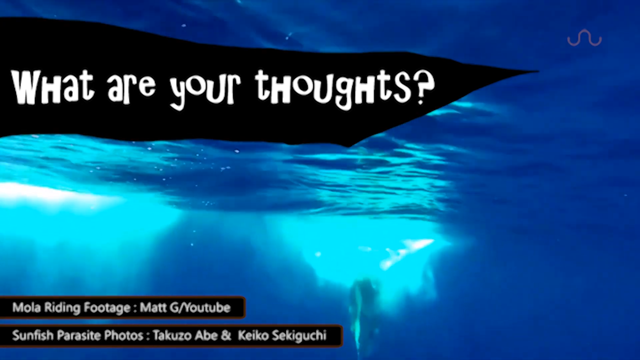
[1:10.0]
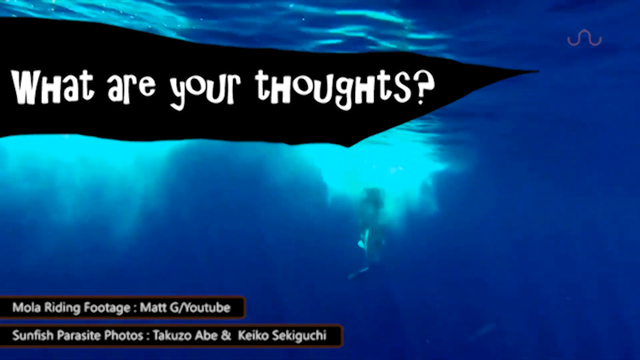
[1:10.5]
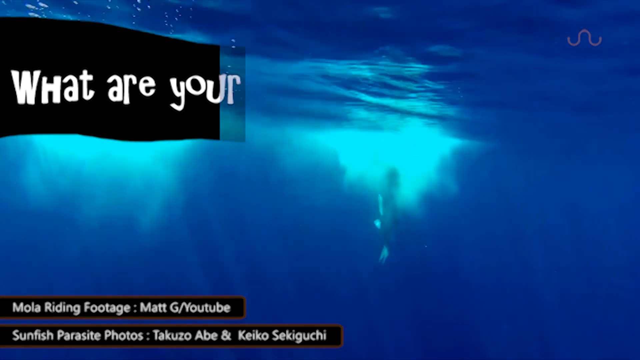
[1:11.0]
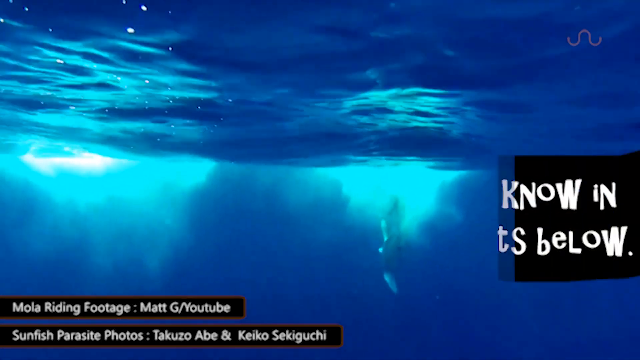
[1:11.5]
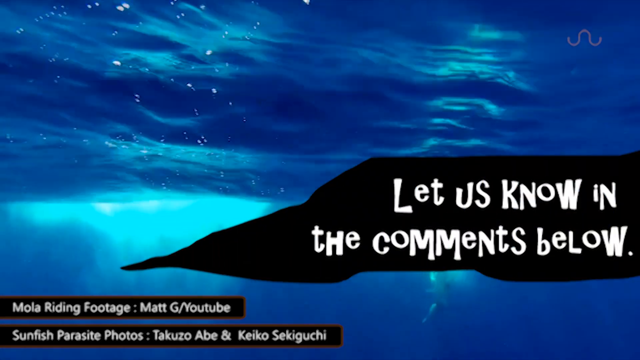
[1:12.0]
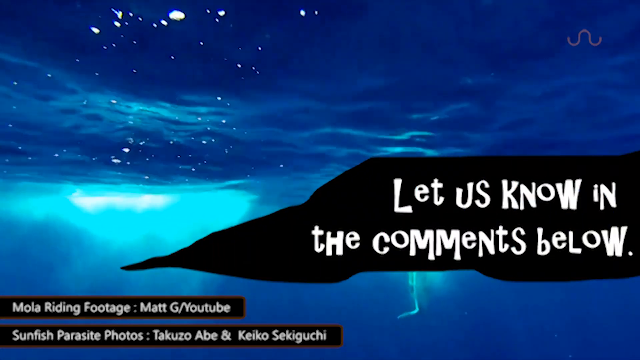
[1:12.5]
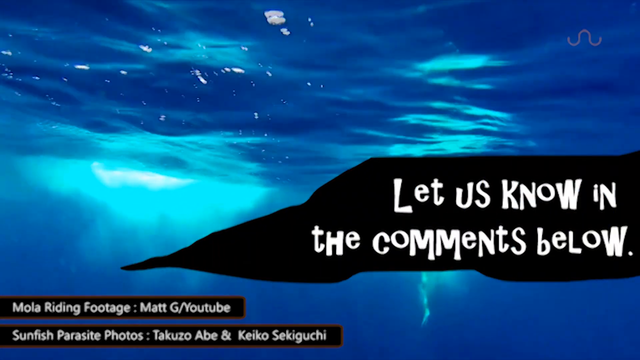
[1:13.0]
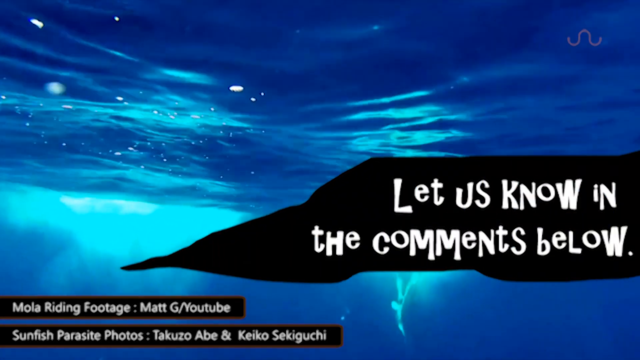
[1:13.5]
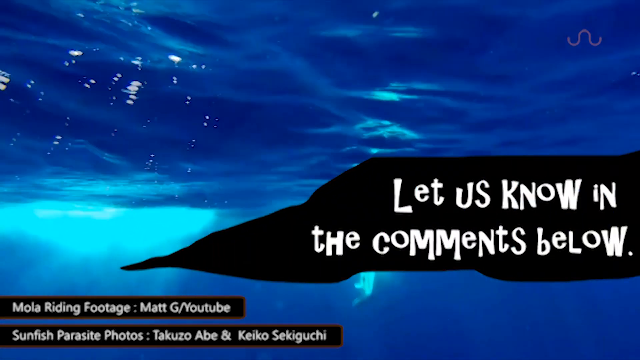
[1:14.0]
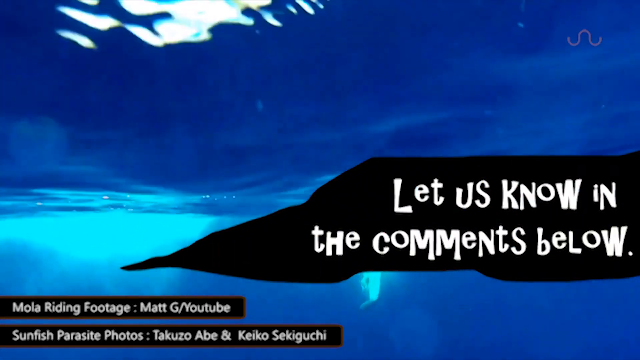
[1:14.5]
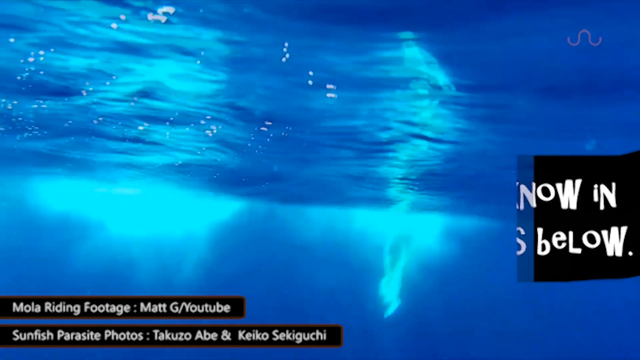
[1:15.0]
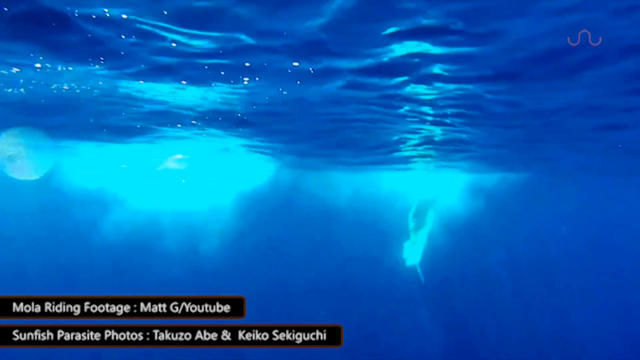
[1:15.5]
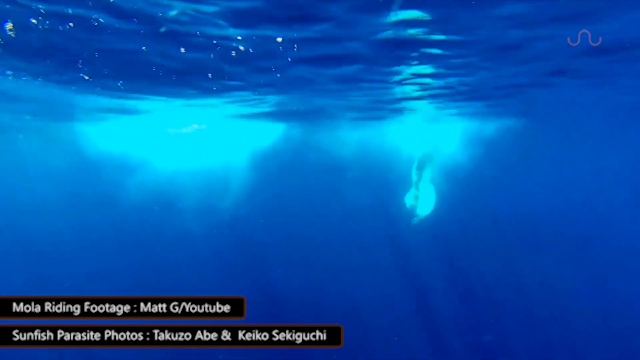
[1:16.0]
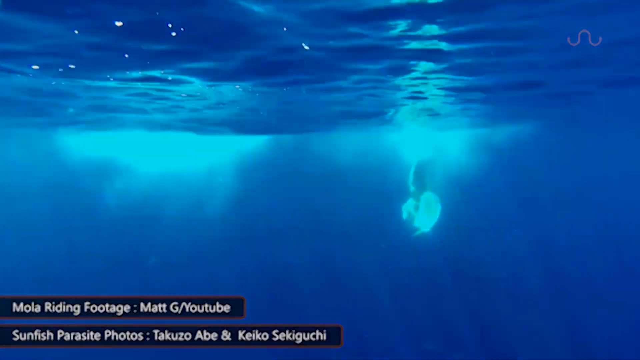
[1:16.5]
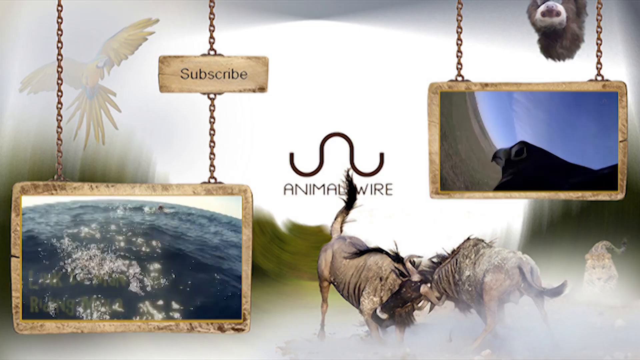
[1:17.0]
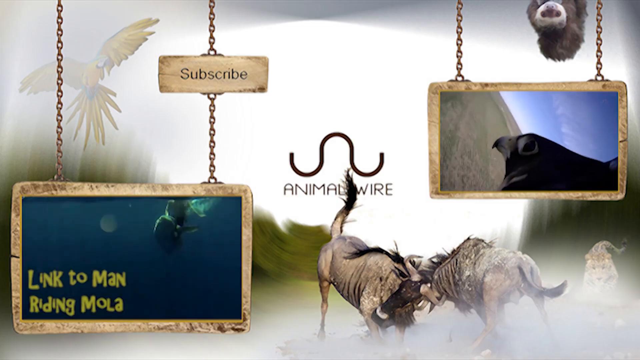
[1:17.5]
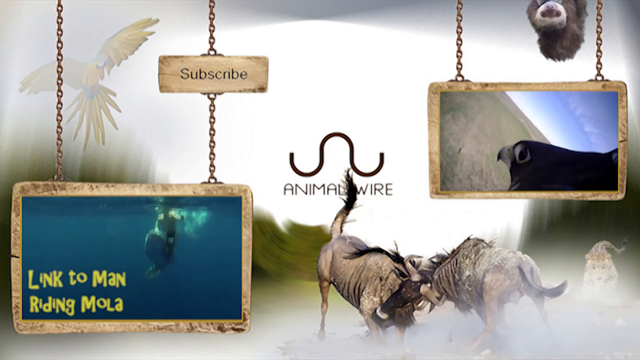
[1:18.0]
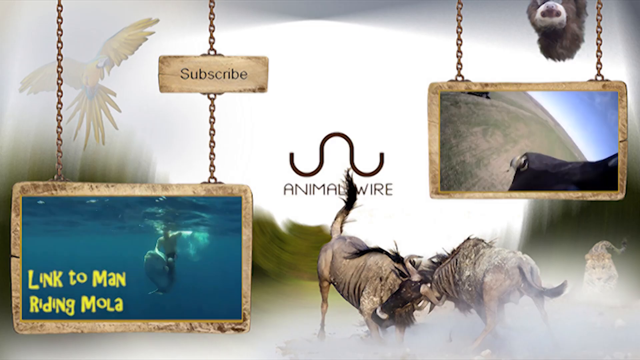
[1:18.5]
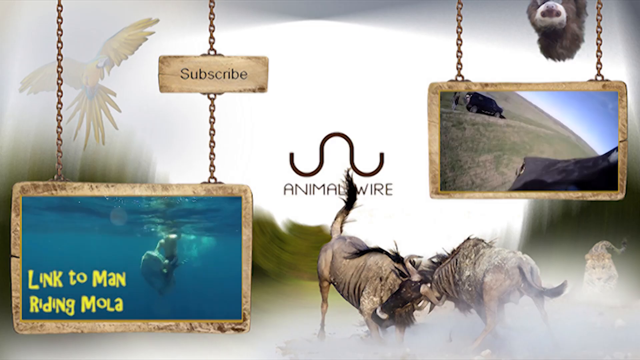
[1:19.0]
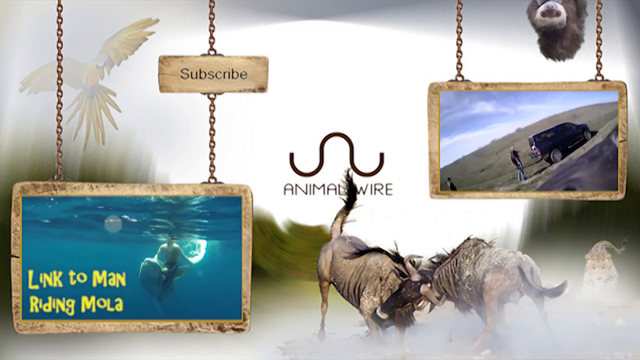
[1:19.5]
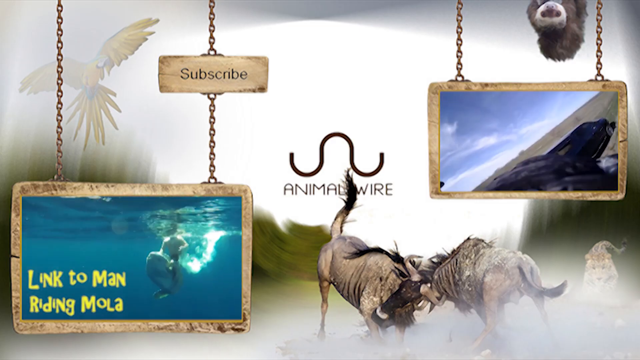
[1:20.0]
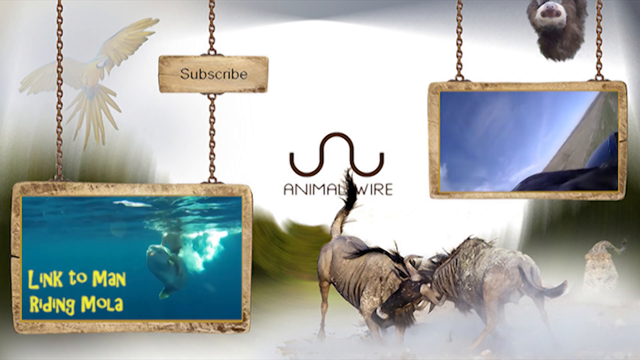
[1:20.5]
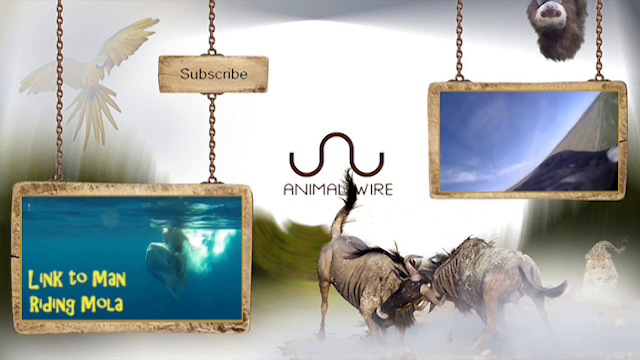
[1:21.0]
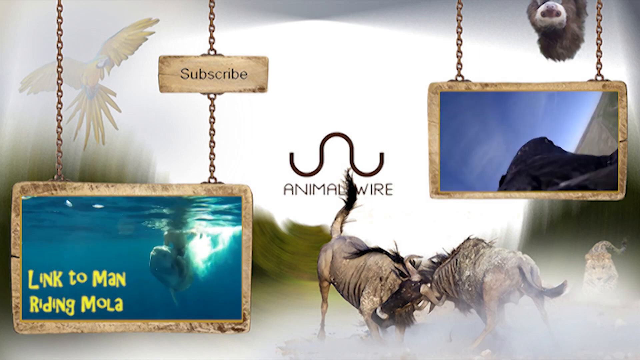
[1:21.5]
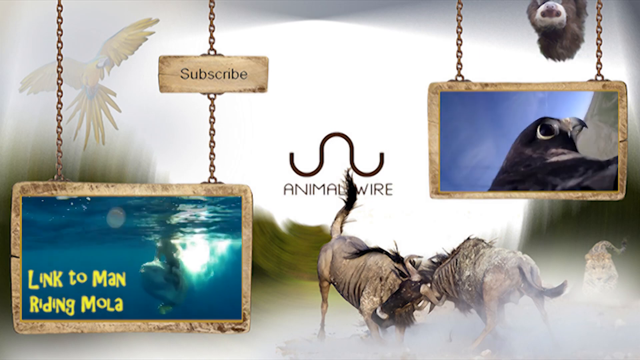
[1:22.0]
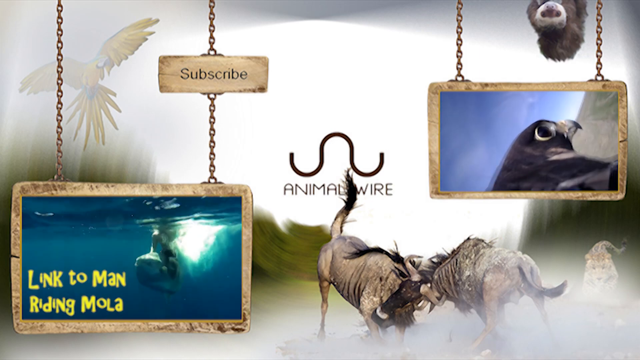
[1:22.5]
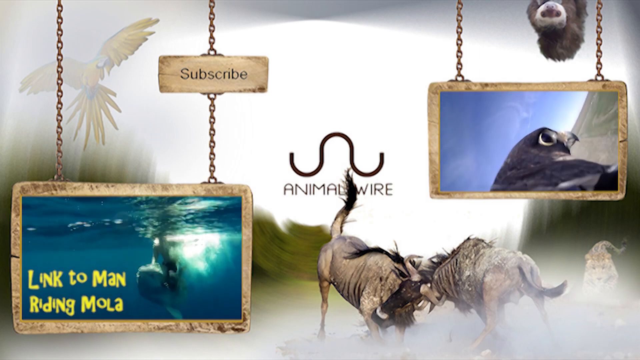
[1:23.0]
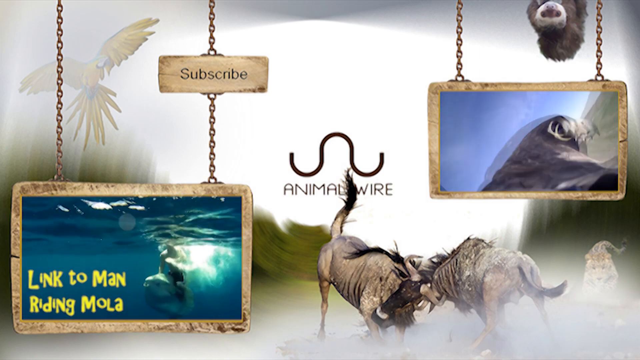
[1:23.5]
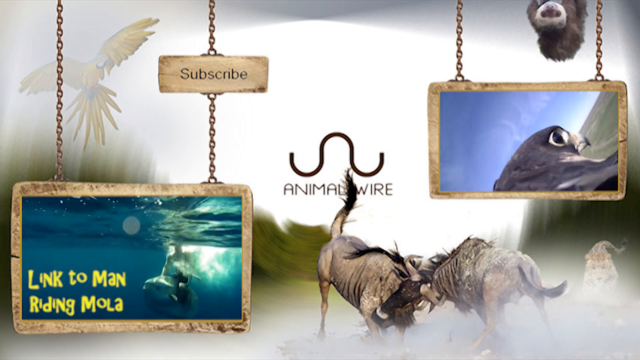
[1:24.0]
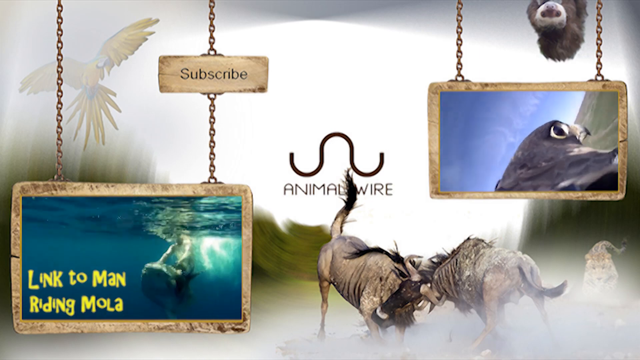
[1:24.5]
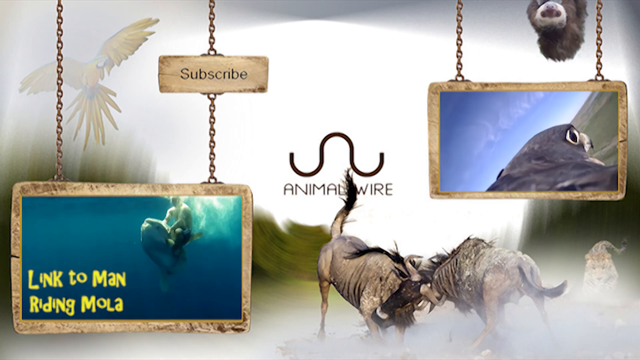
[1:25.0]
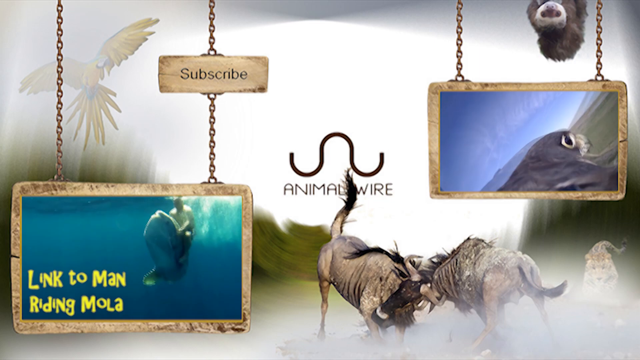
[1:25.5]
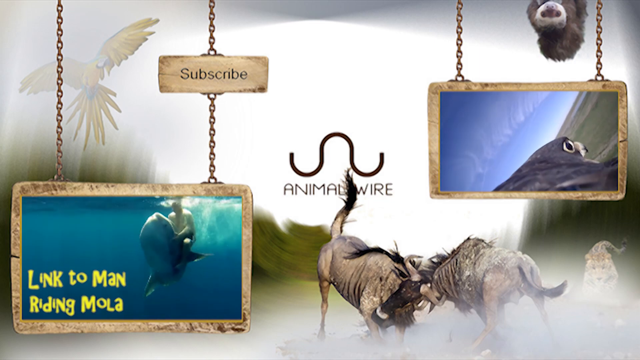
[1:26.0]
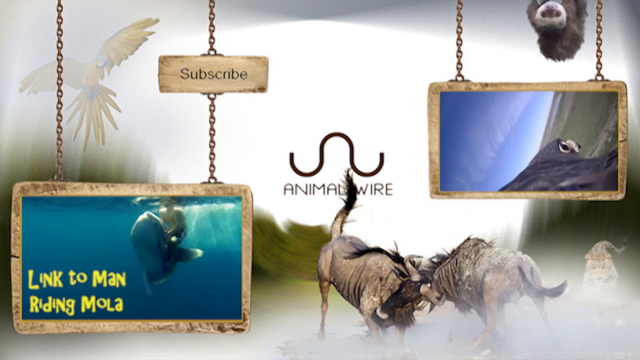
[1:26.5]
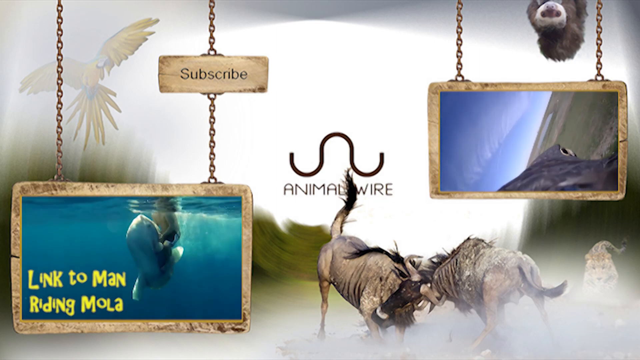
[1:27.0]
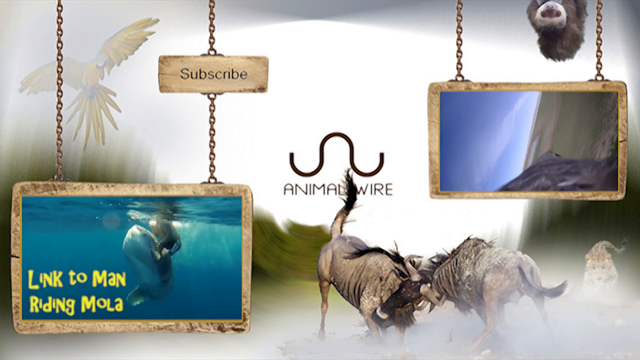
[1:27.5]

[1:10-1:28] On-screen text includes "let us know in the comments below", a mention of Mola riding footage, and more text apparently explaining the footage that was captured. Text also says a Sunfish Paradise photo was taken by somebody else. The video seems to show something like a time-lapse.